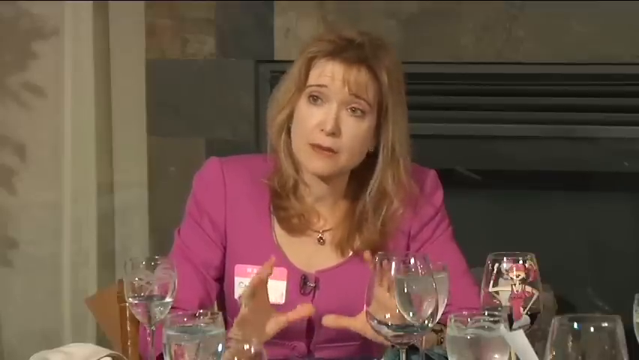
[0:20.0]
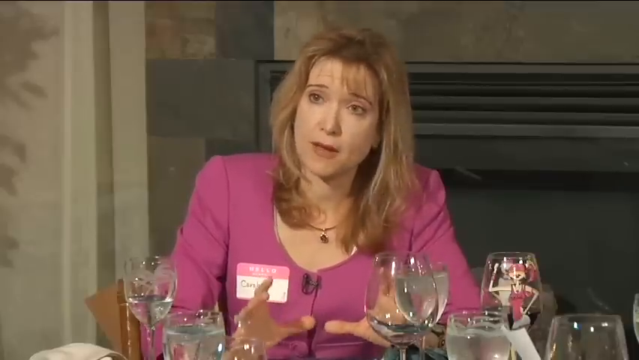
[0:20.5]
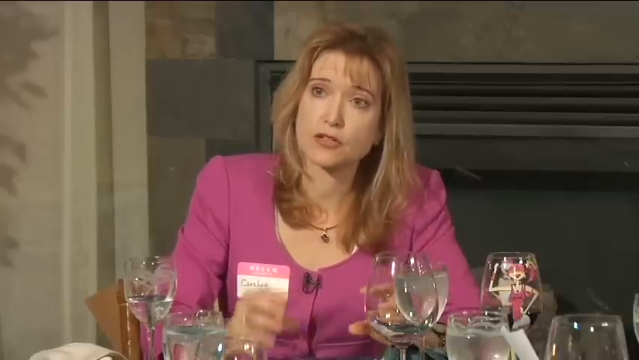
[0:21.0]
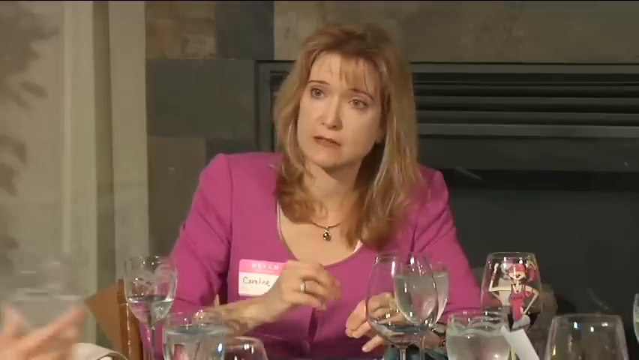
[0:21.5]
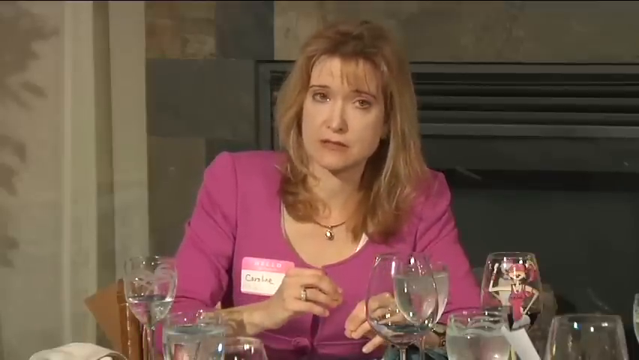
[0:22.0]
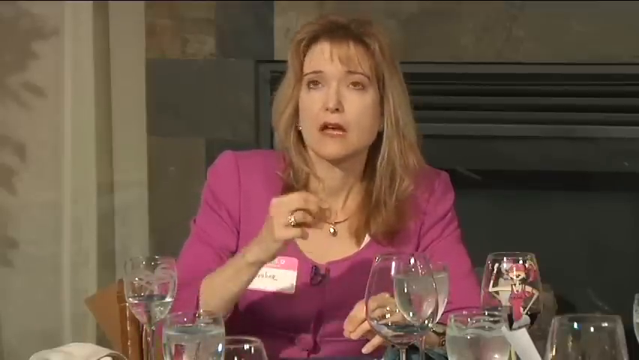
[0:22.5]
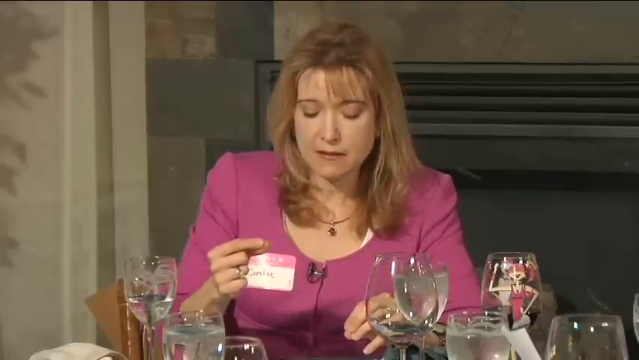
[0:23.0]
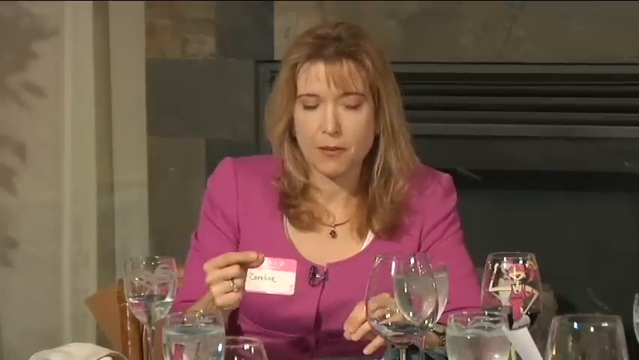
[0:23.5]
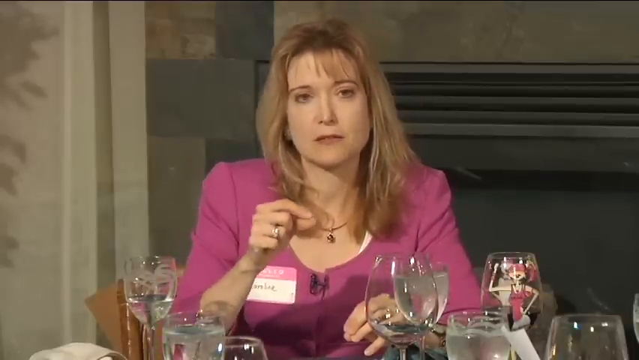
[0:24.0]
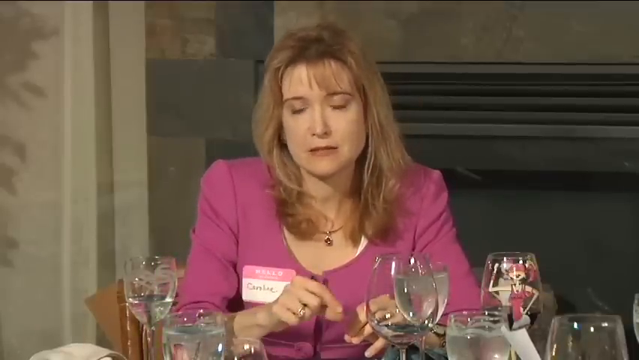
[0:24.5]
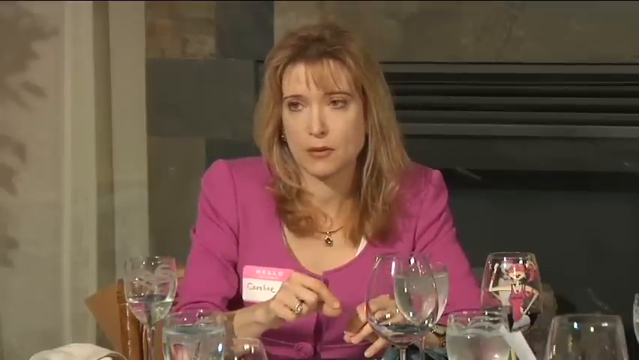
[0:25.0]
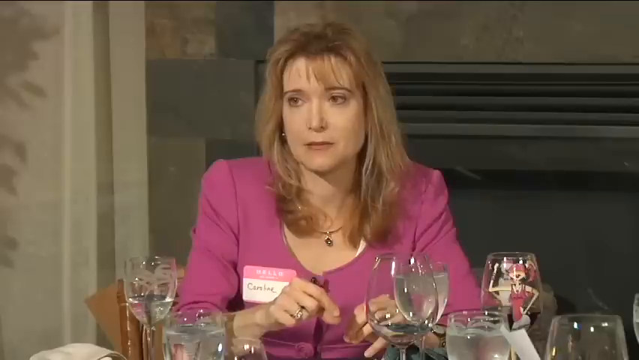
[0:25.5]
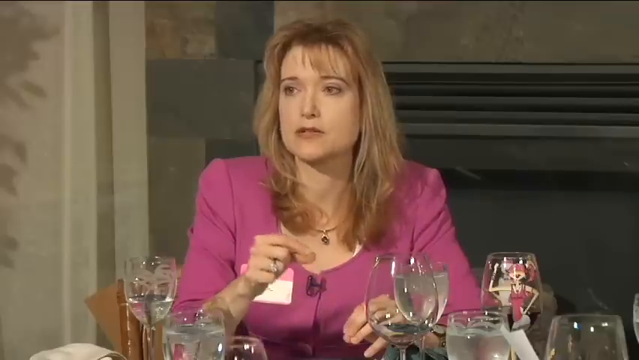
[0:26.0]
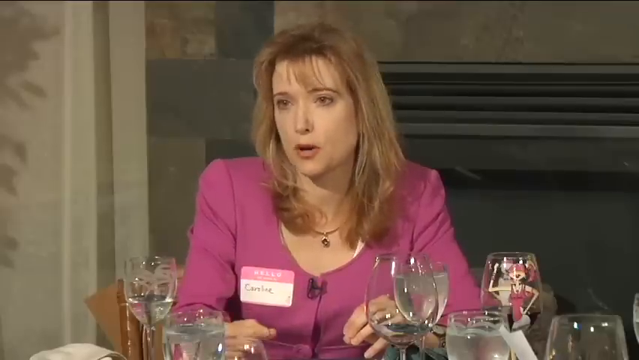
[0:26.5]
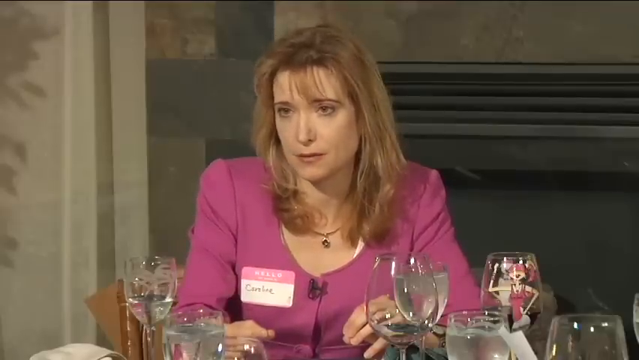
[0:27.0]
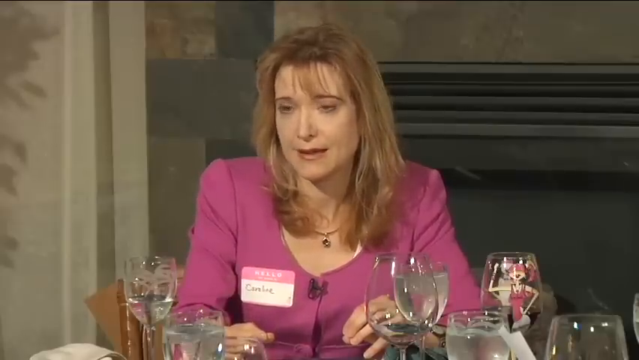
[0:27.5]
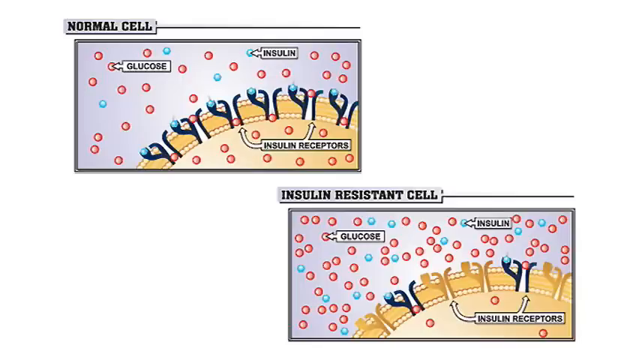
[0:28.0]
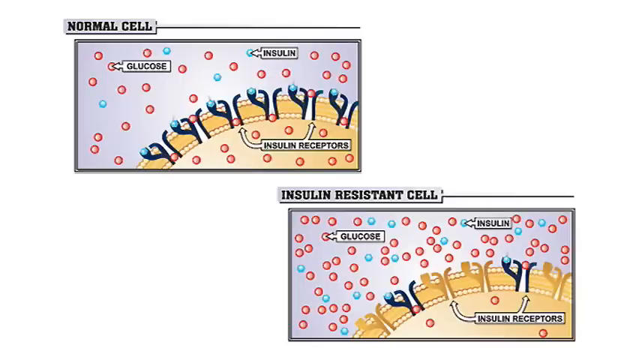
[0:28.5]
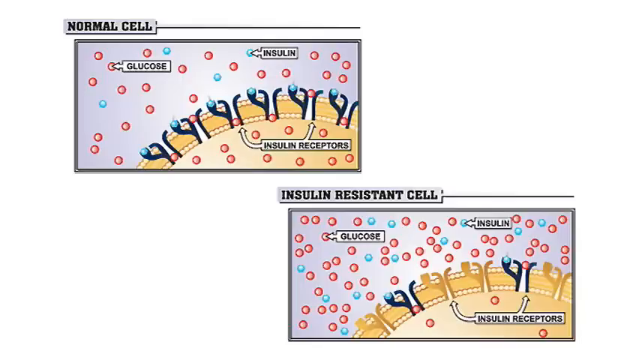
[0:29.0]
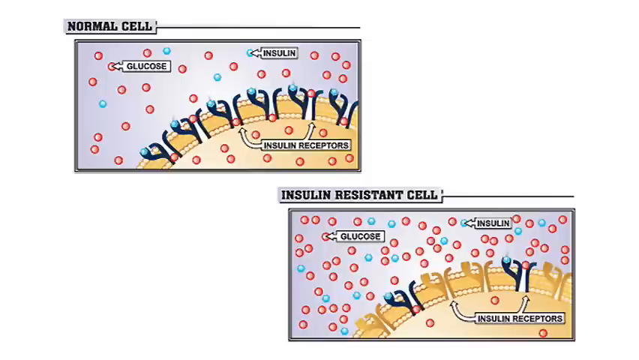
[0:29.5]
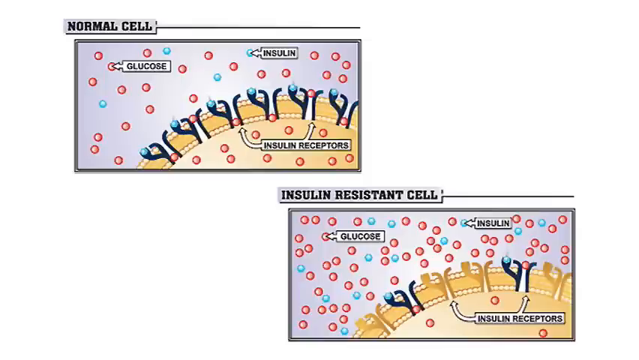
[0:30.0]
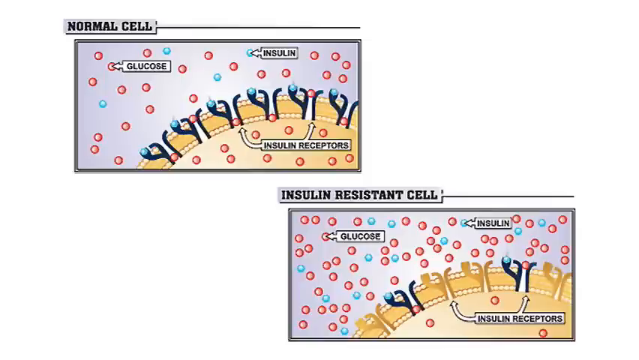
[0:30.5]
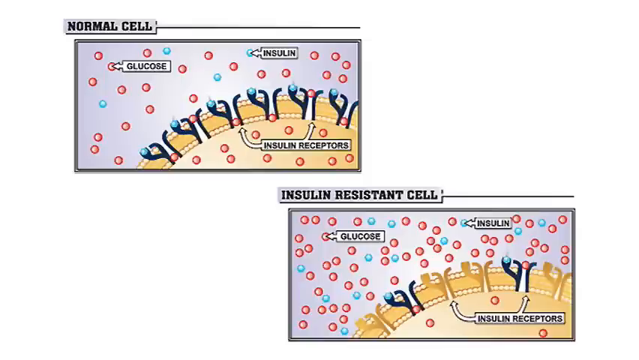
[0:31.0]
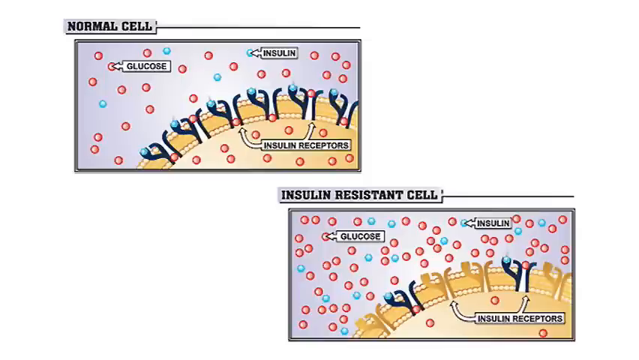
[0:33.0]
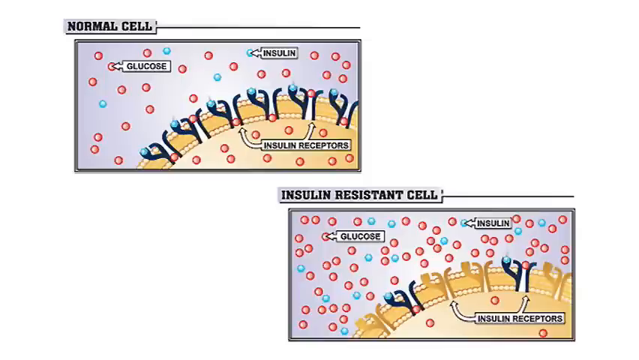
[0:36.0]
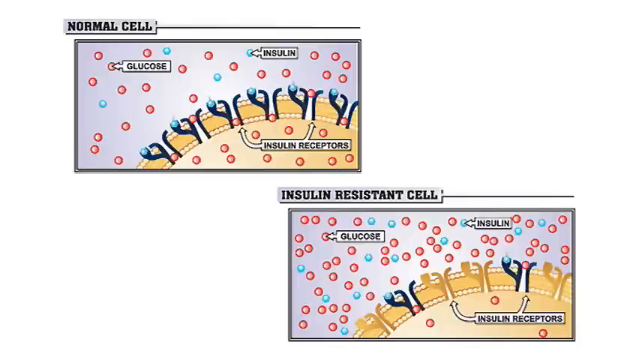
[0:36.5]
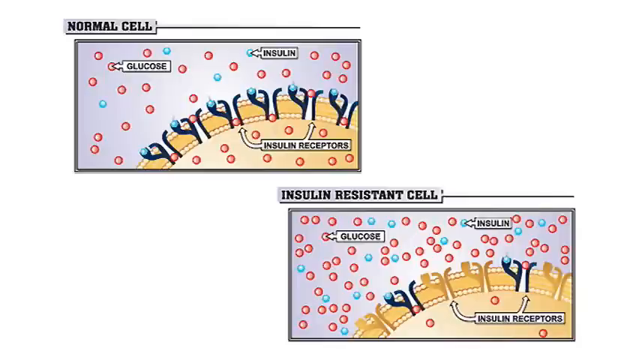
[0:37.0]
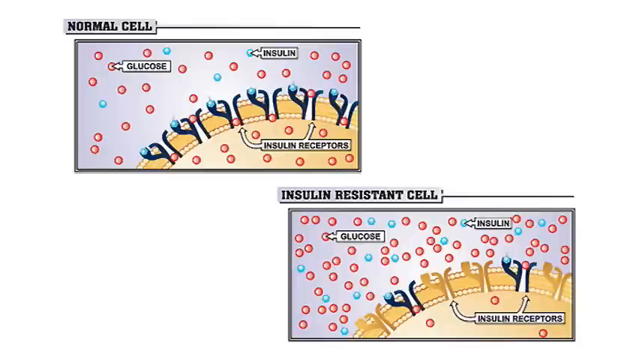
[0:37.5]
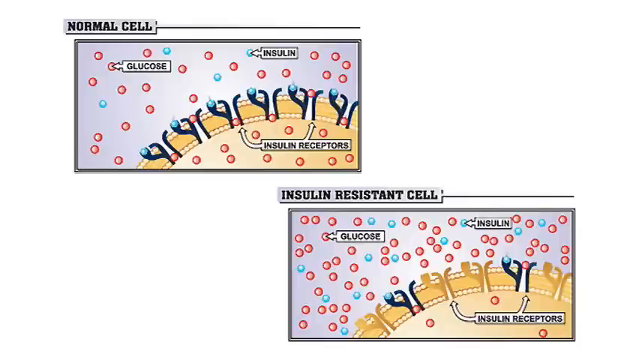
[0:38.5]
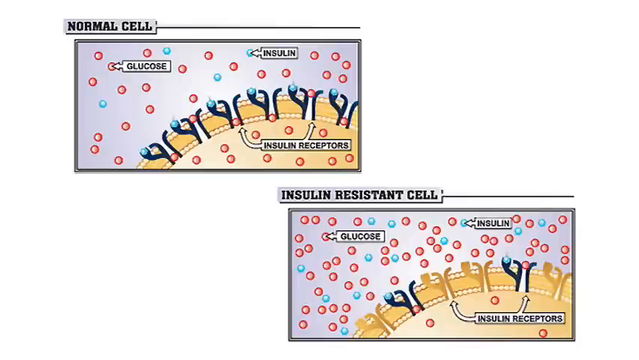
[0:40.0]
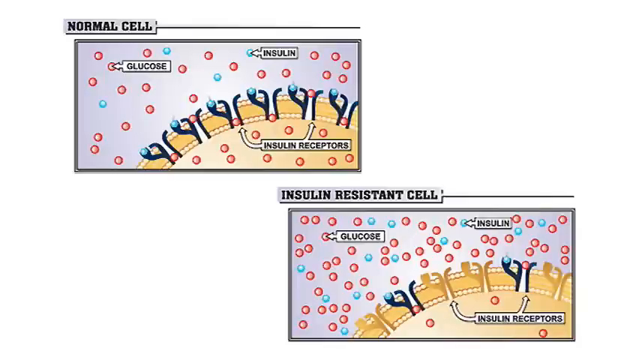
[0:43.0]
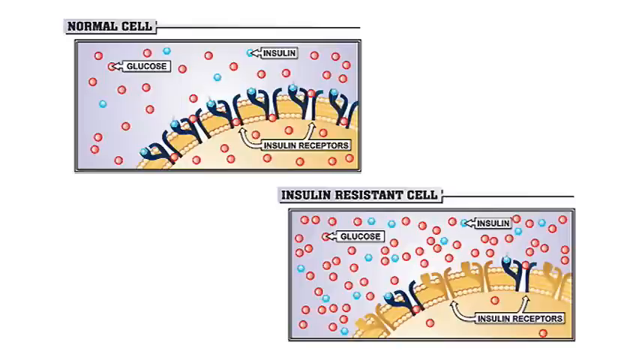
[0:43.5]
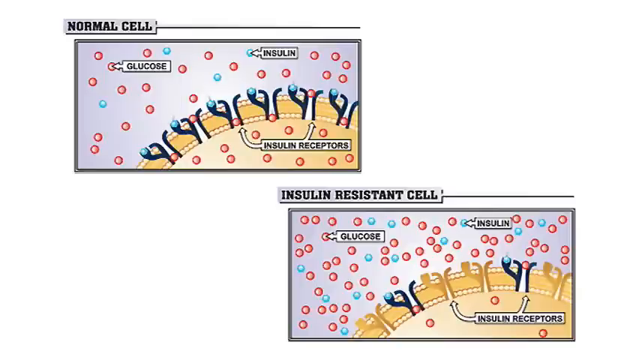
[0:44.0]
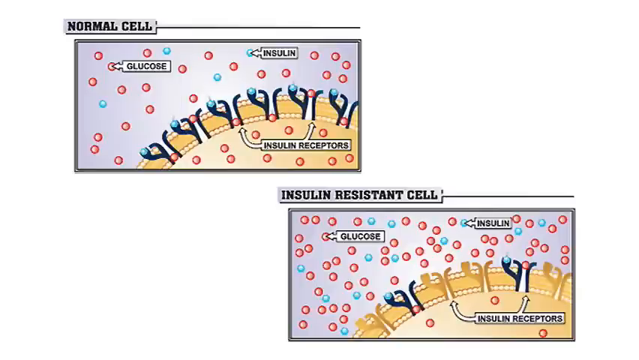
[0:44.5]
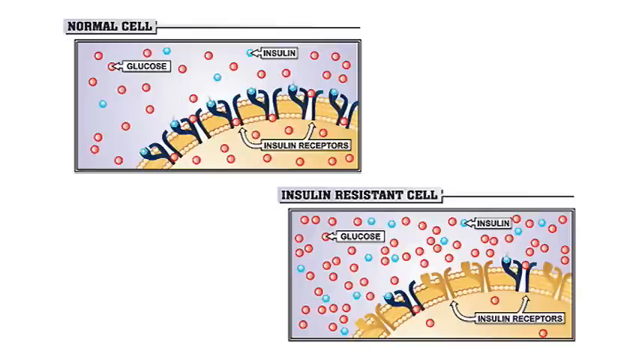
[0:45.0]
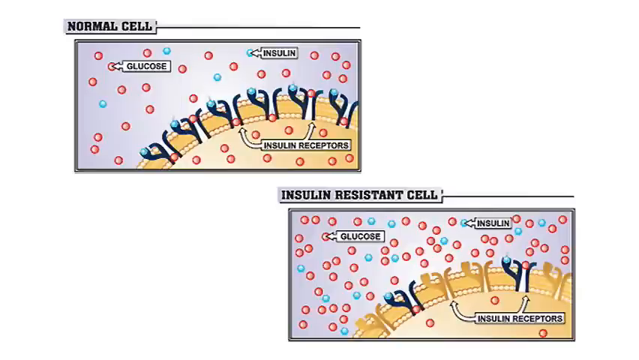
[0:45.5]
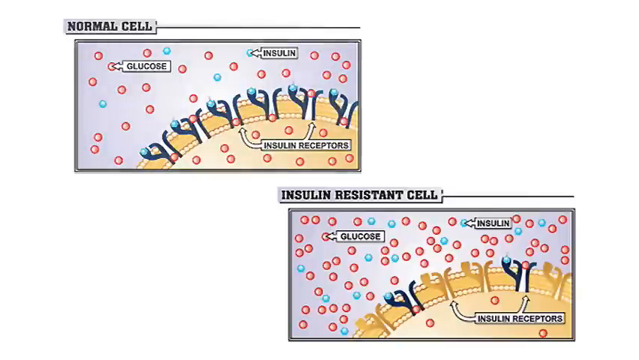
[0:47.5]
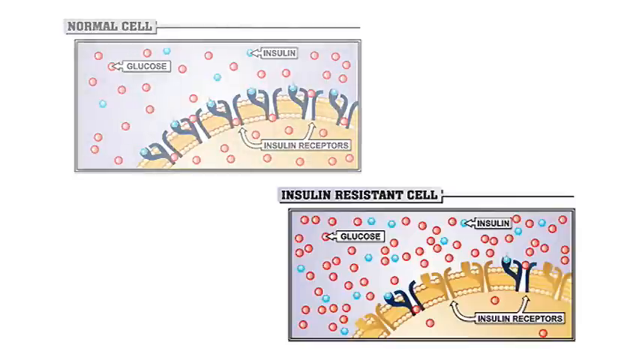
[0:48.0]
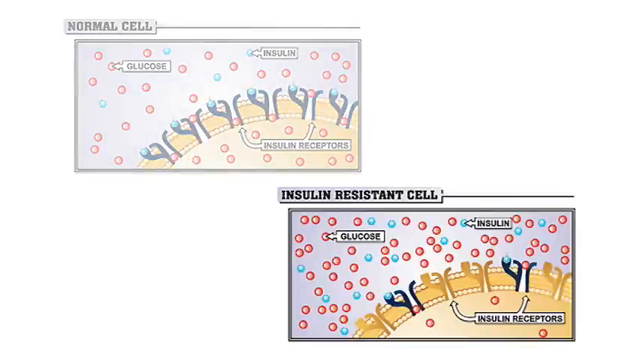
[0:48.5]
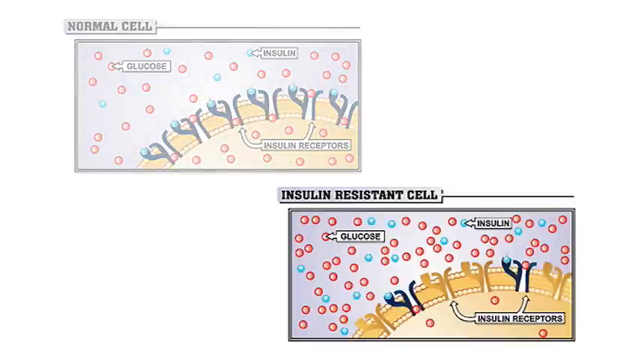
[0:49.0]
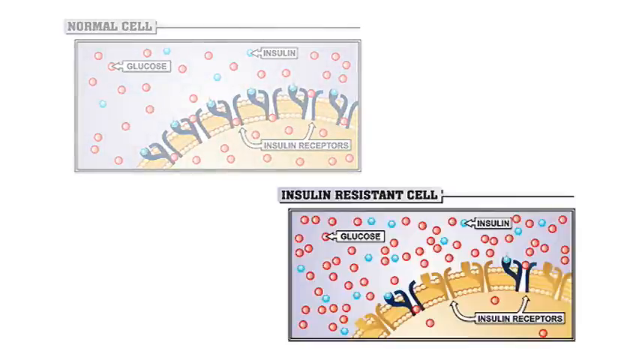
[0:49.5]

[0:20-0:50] A woman in a pink top is talking at the head of the table, using her right hand, fingers kind of together, and moving it forward and backward as she speaks. The view switches to a screen showing blood cells. In the upper left it reads "normal cell", with an arrow pointing to the glucose cell, an arrow pointing to the insulin cell, and the insulin receptors below. A banner in the lower right corner reads "insulin resistance cell" and likewise points to the glucose cell, the insulin cell and the insulin receptors. A group of women sits at a table, apparently having a meeting.